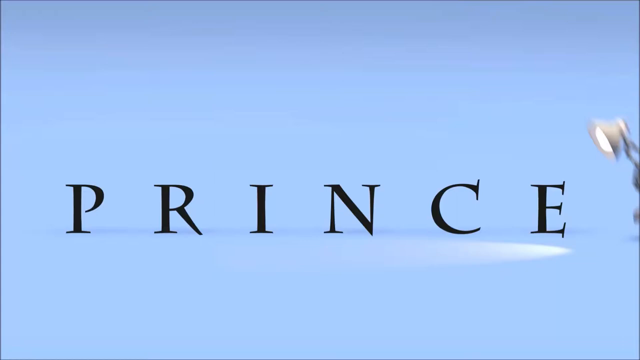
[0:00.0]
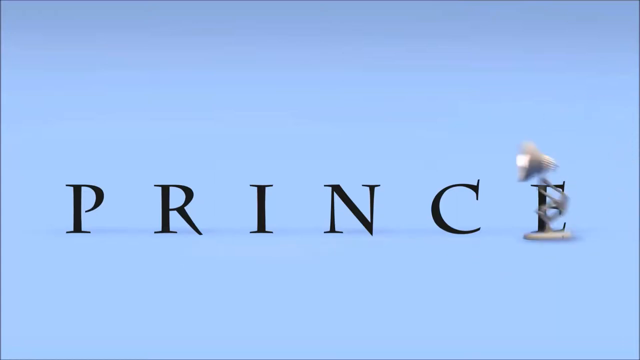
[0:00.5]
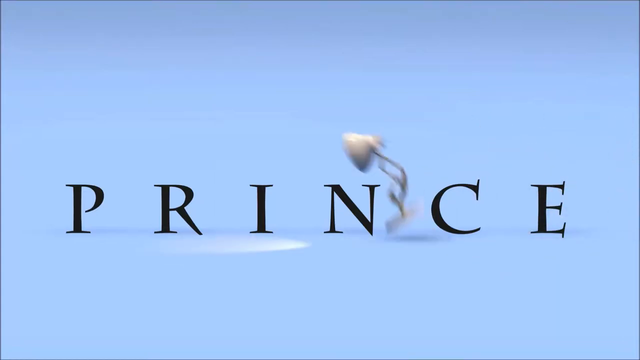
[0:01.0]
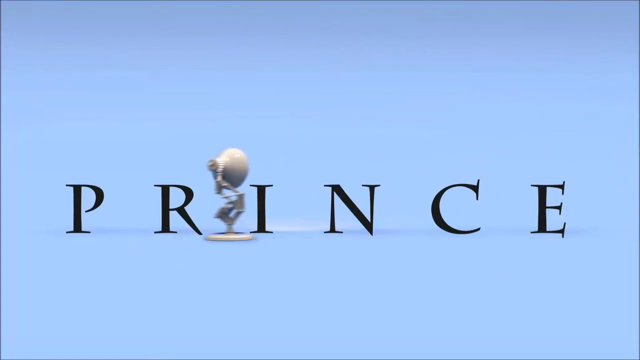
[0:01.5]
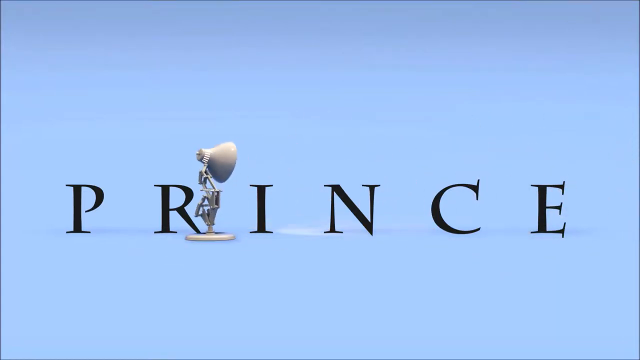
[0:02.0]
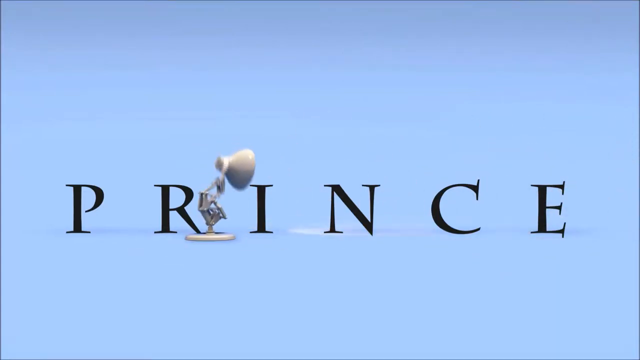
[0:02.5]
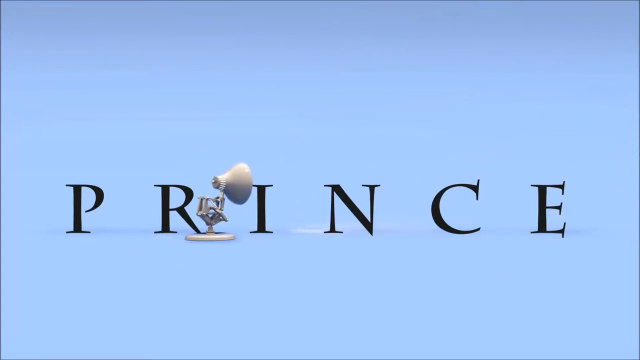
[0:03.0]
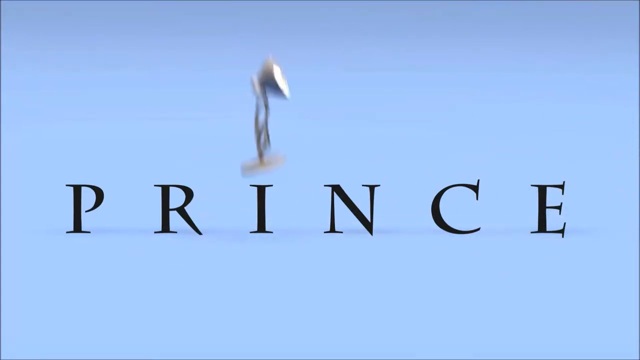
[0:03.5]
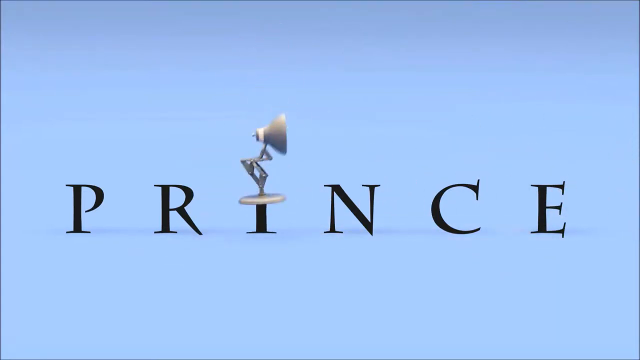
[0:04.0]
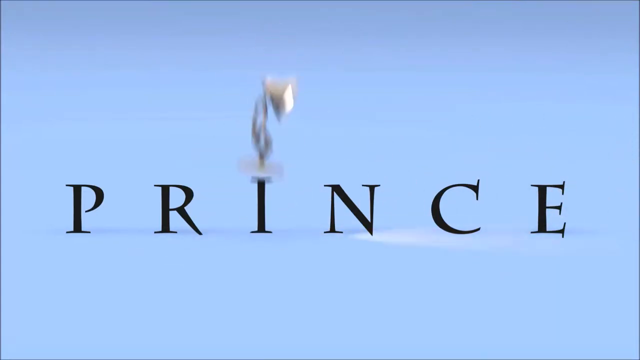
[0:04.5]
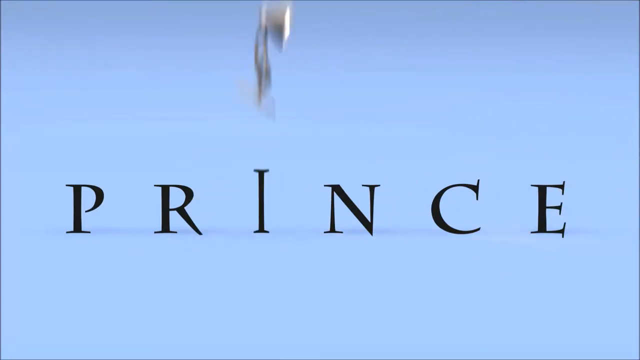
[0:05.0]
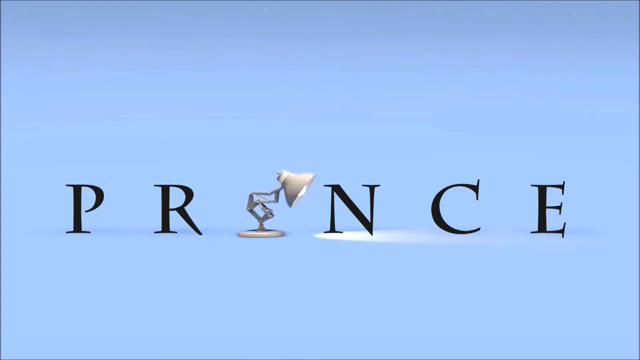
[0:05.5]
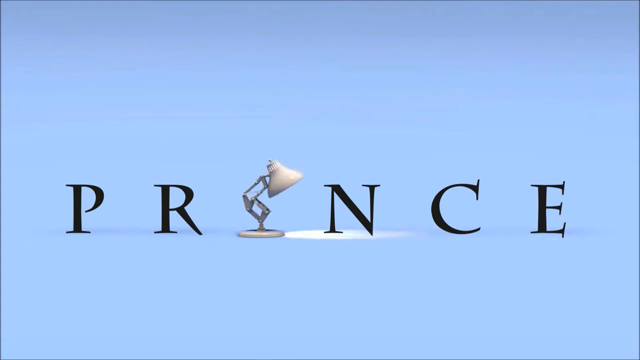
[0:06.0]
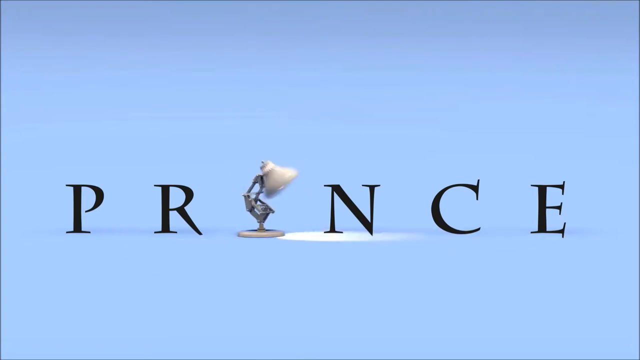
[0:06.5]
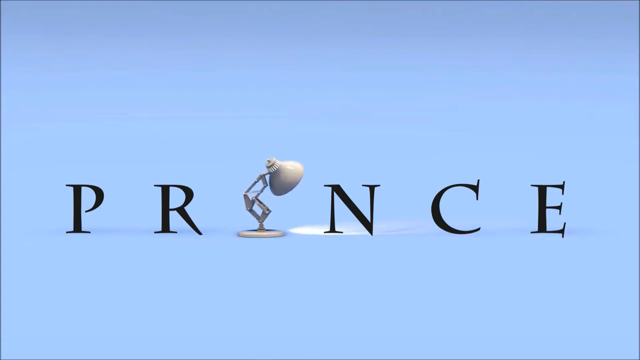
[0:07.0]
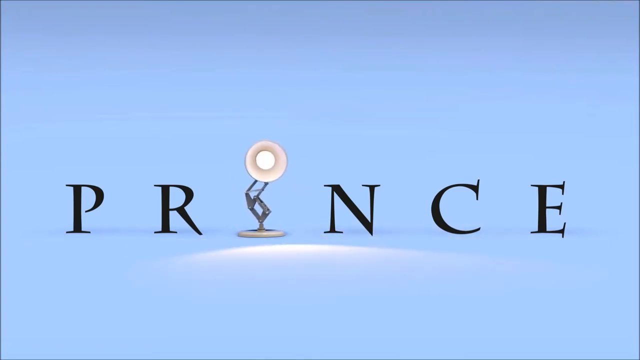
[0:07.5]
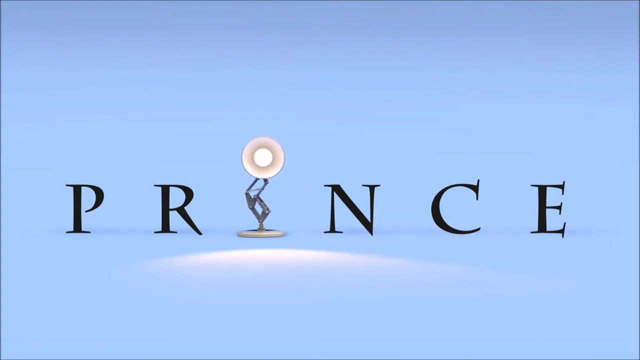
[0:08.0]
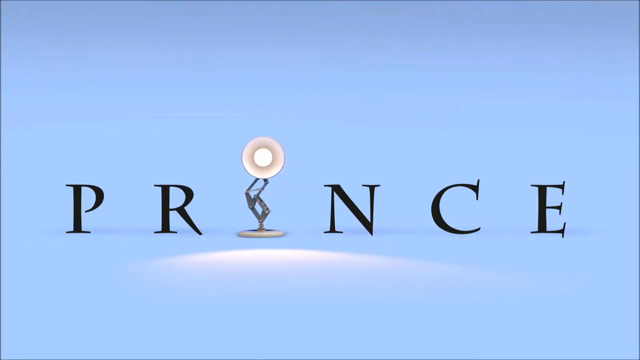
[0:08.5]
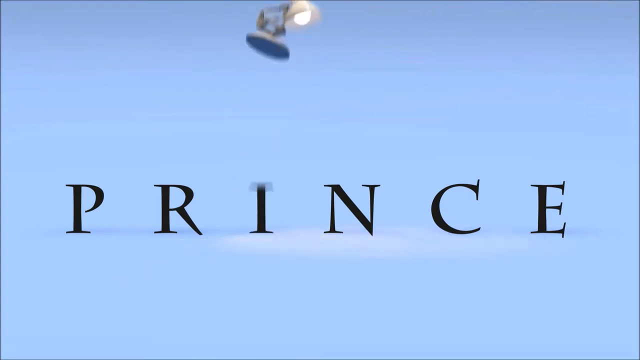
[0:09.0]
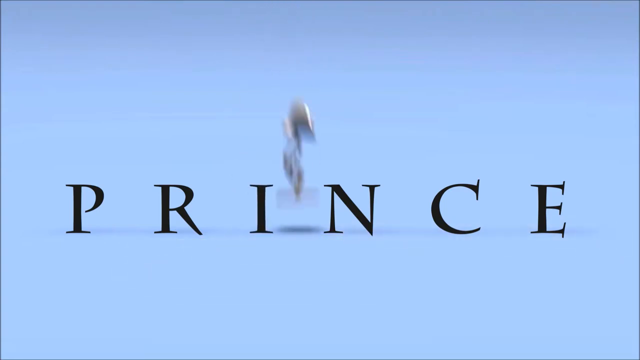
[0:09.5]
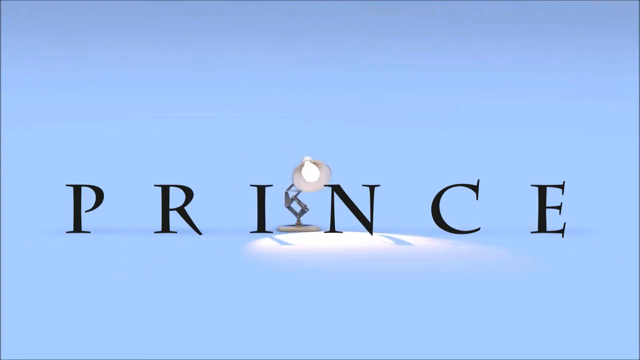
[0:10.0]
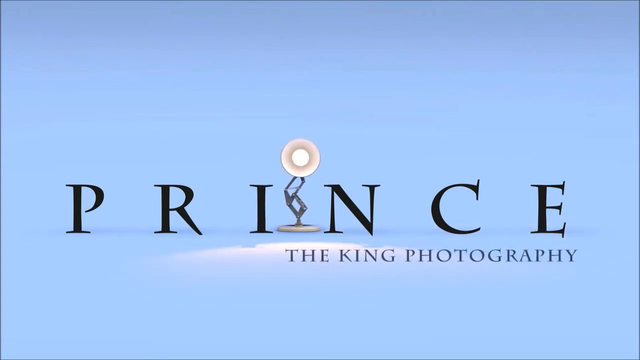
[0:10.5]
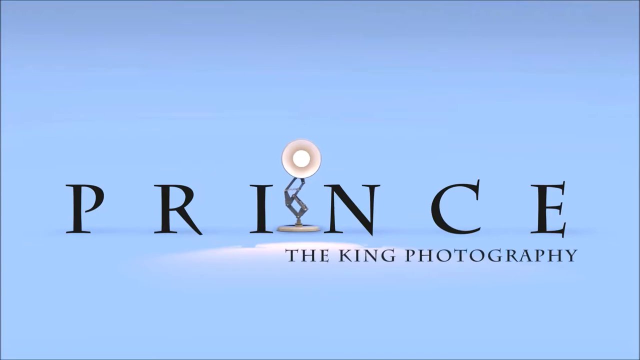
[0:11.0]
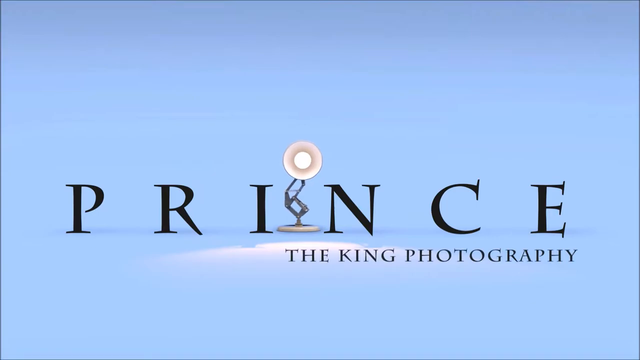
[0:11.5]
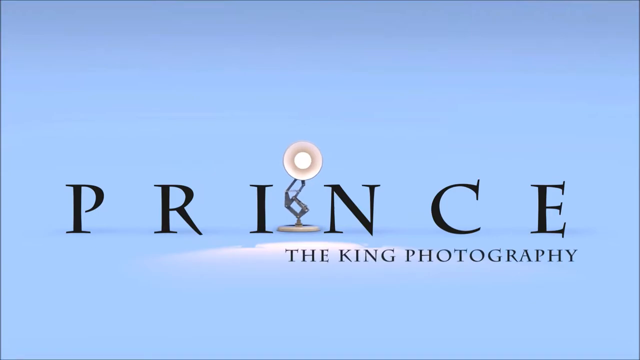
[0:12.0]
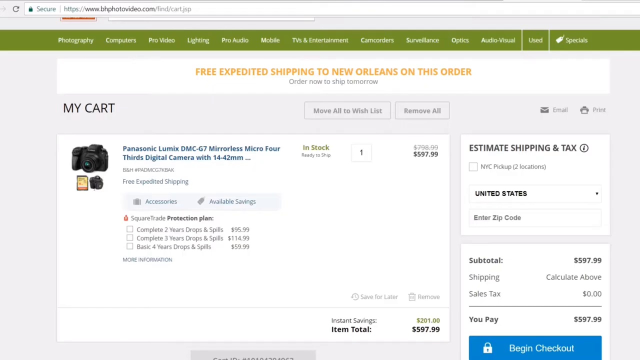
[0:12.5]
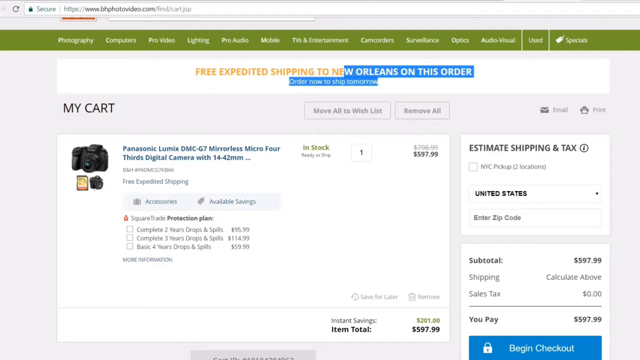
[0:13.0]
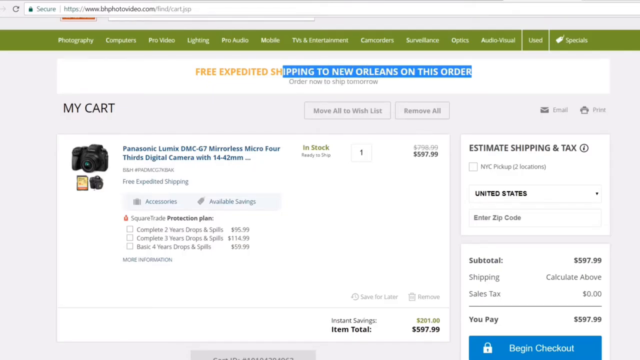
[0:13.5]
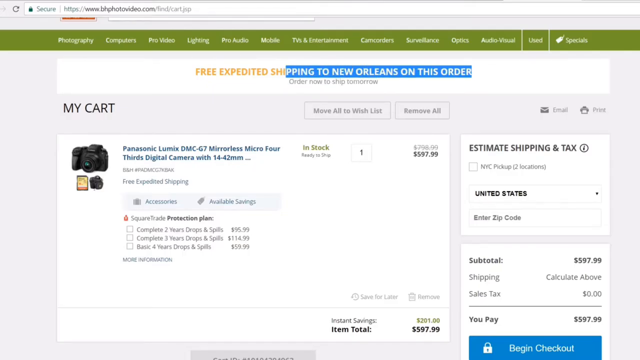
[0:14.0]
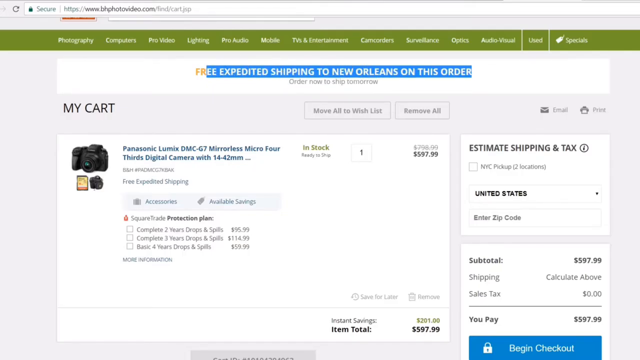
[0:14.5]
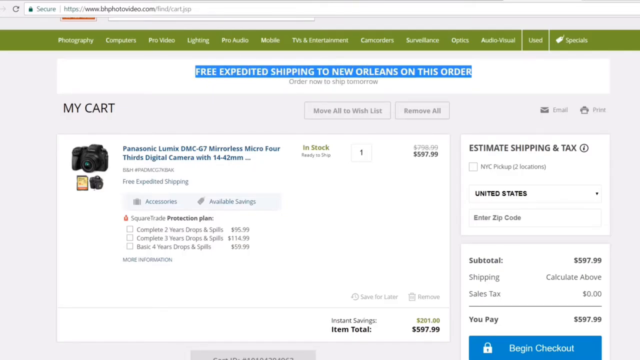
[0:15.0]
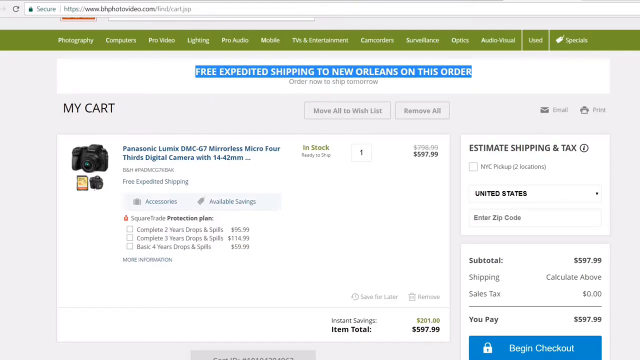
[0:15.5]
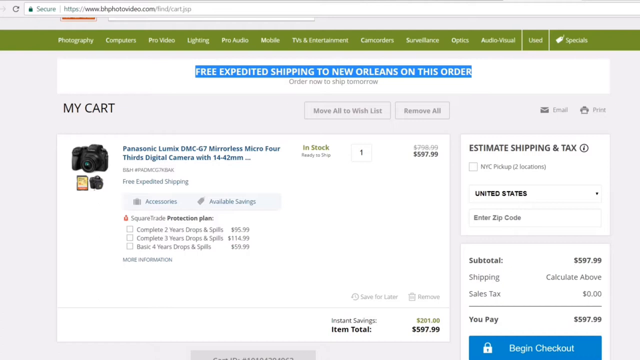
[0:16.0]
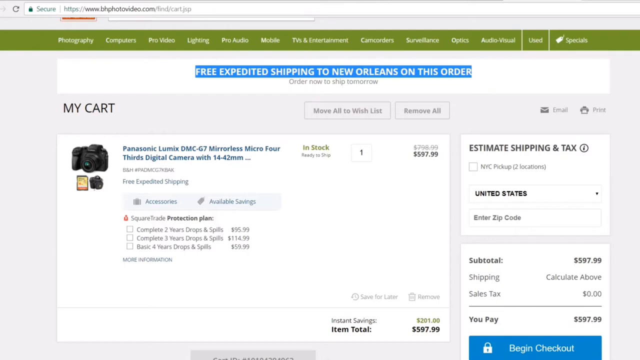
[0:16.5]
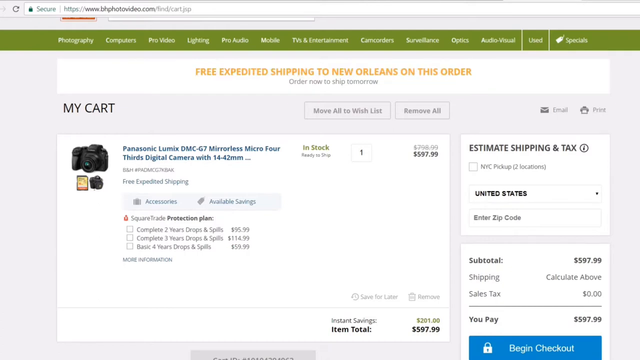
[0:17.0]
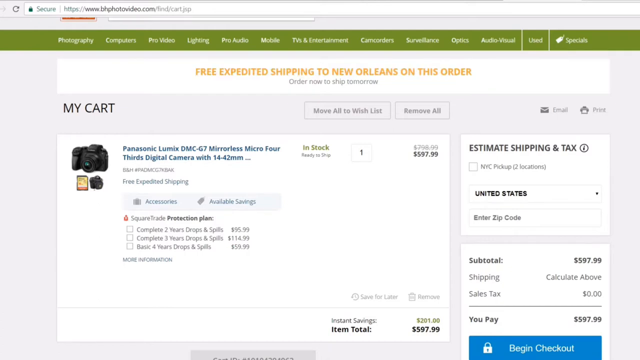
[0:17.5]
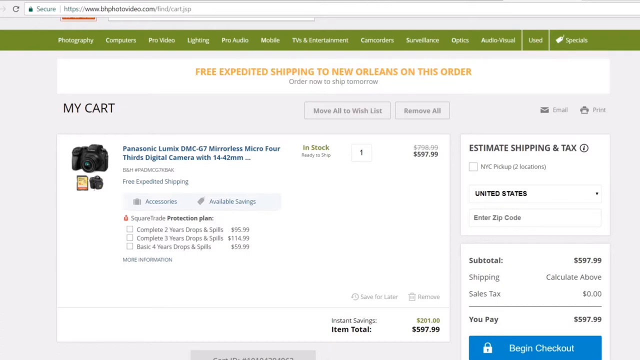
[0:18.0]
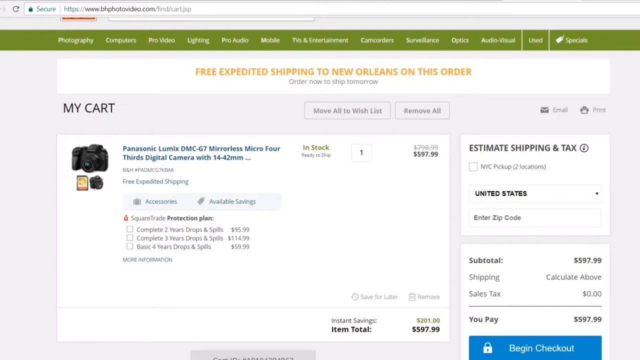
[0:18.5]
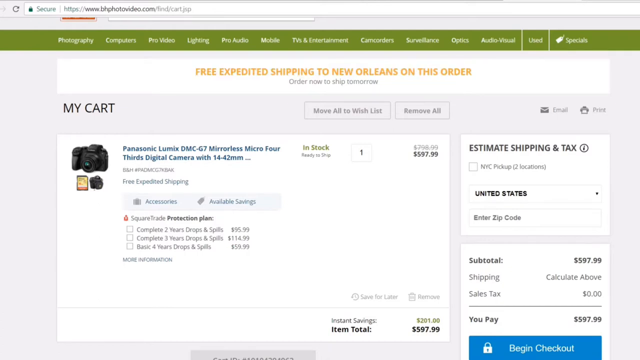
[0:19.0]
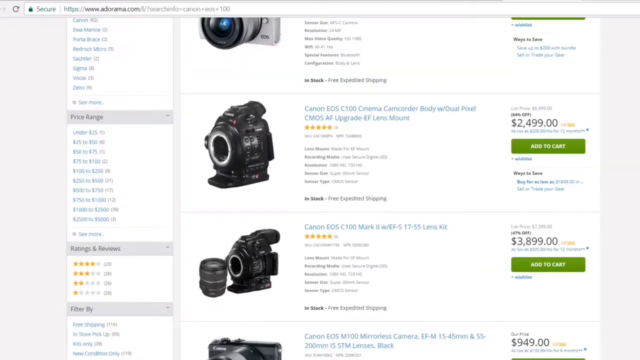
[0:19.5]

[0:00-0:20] The video opens on a light blue screen with black text spelling P-R-I-N-C-E. An animated lamp jumps in from the right side to the left side, then goes back and stops at the letter I. It keeps jumping on top of the I until the letter is nowhere to be seen and the lamp is standing on top of it. The lamp kind of appears to be looking for it, finally faces the camera straight on, and jumps up; the letter I hops back up, and the lamp jumps beside it and stays there, between the letters I and N. Smaller text appears underneath reading "The King Photography." The video then moves to another screen that looks like the cart of a website, with a green banner on top; below it, text reads "free expedited shipping to New Orleans on this order," which is gradually highlighted in blue.